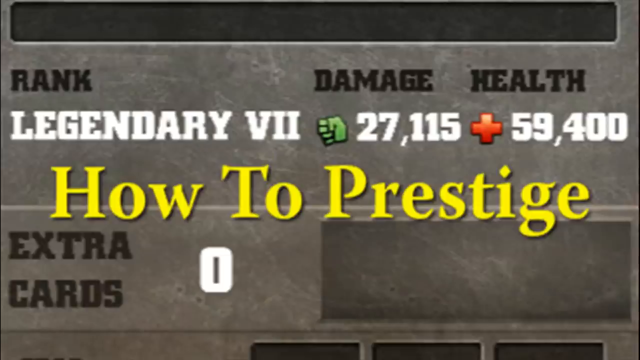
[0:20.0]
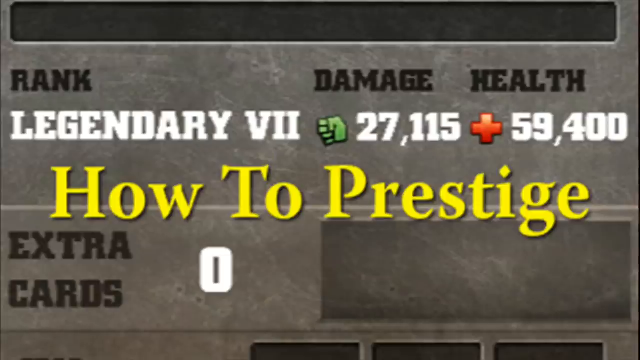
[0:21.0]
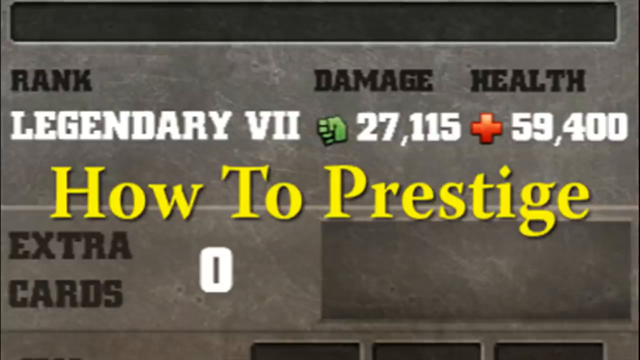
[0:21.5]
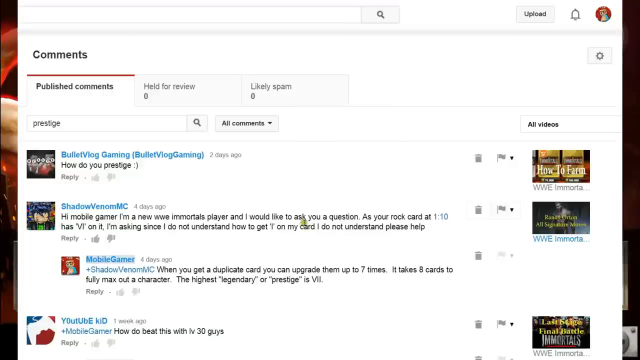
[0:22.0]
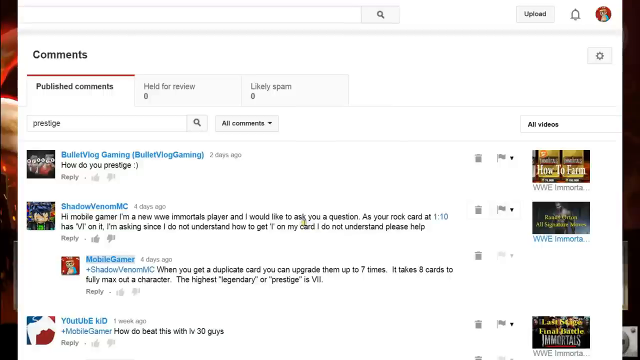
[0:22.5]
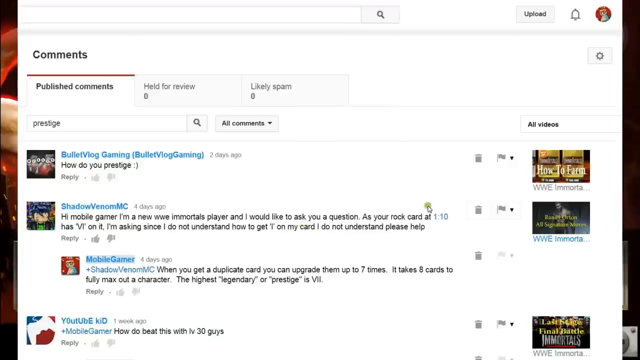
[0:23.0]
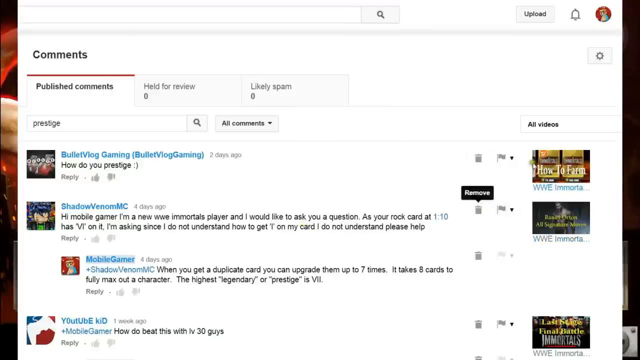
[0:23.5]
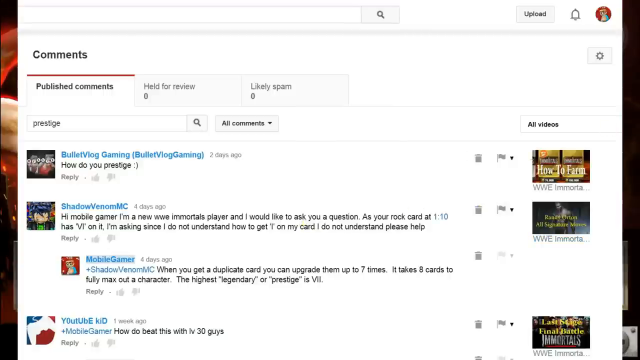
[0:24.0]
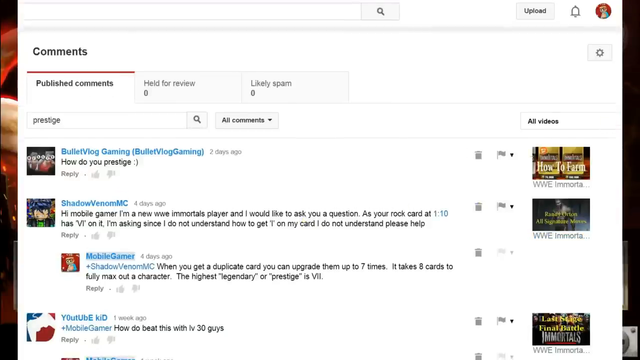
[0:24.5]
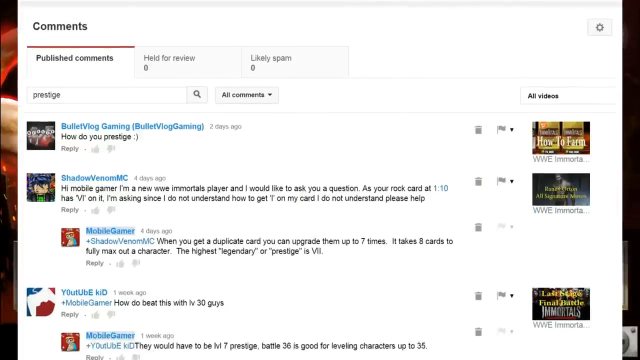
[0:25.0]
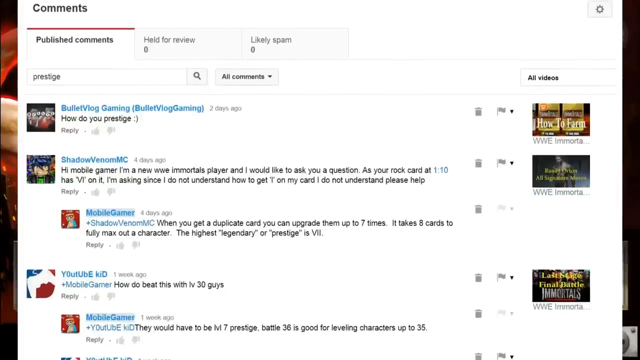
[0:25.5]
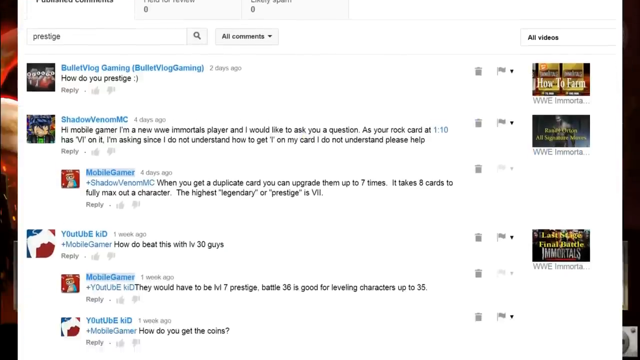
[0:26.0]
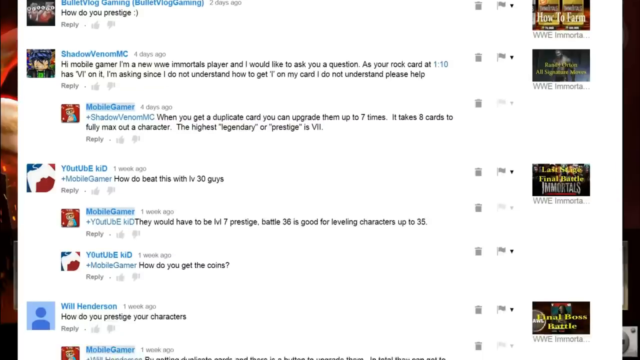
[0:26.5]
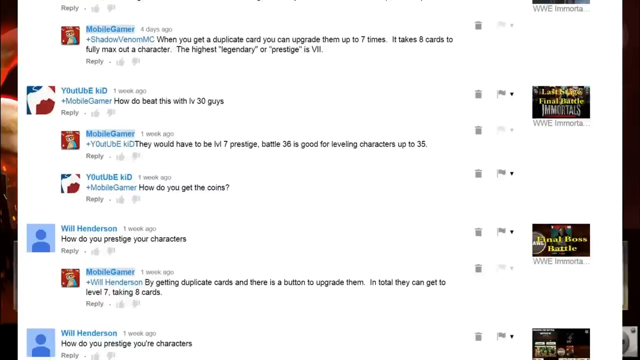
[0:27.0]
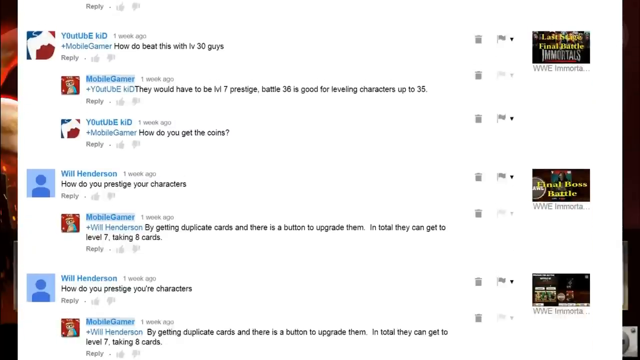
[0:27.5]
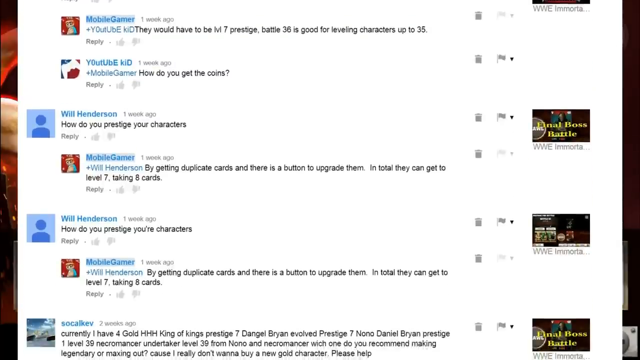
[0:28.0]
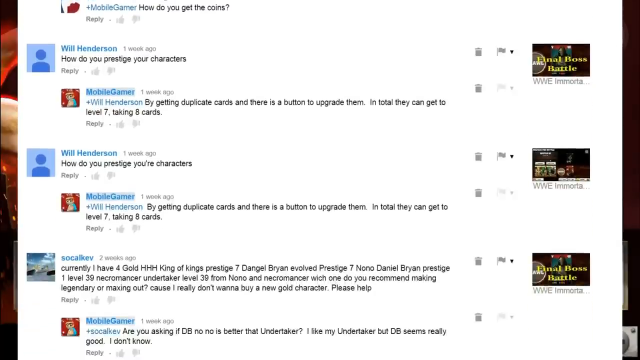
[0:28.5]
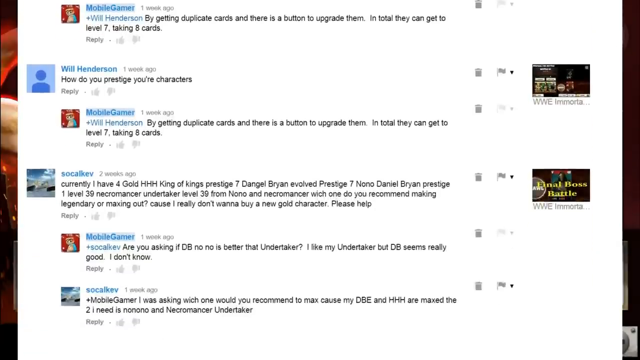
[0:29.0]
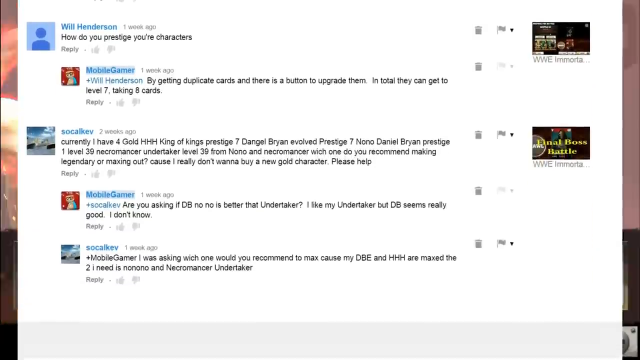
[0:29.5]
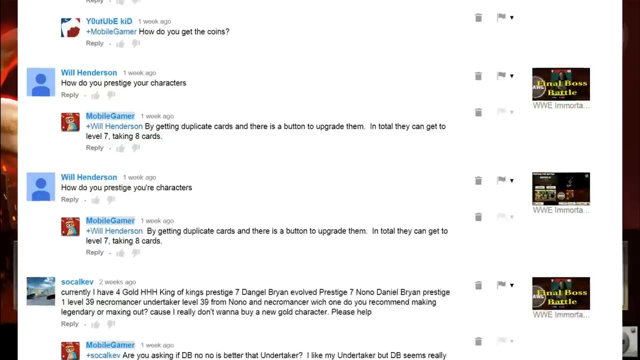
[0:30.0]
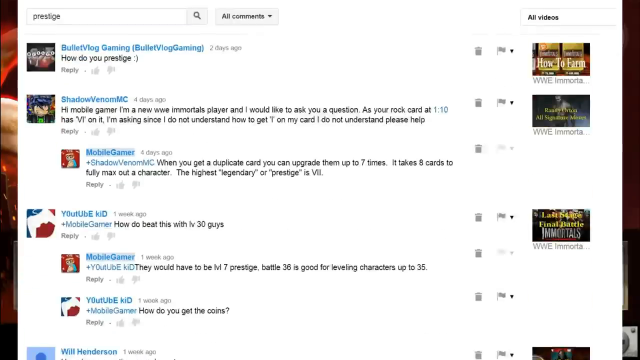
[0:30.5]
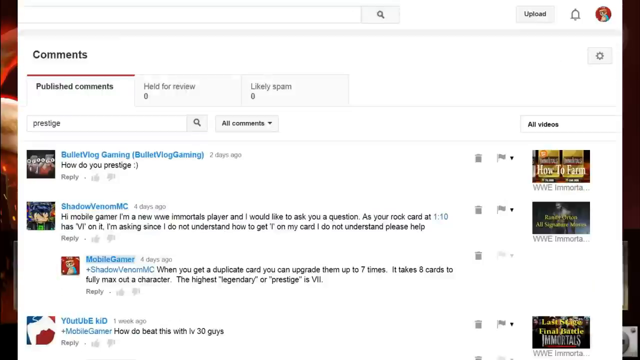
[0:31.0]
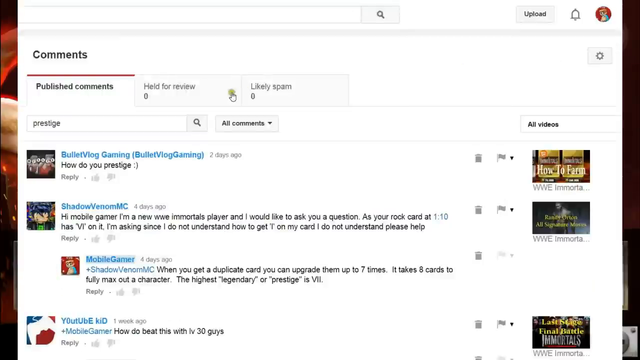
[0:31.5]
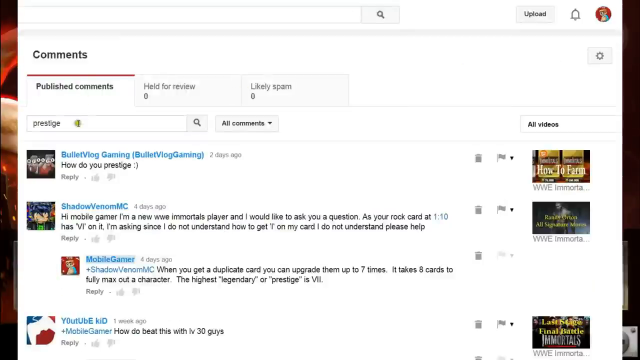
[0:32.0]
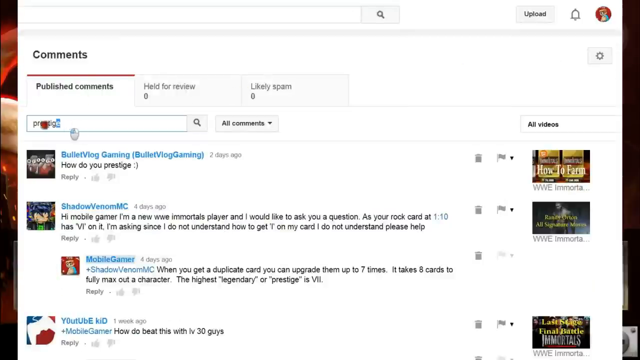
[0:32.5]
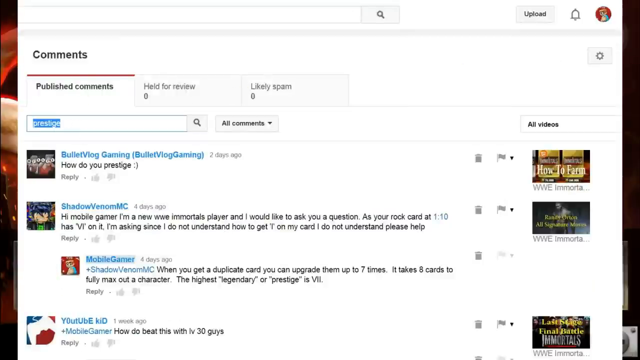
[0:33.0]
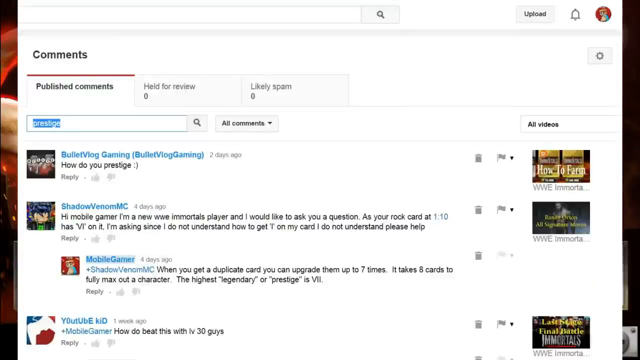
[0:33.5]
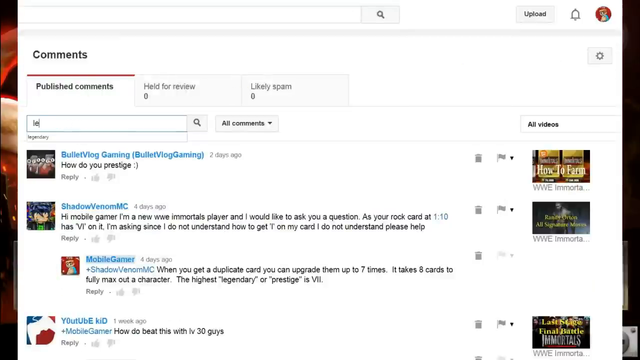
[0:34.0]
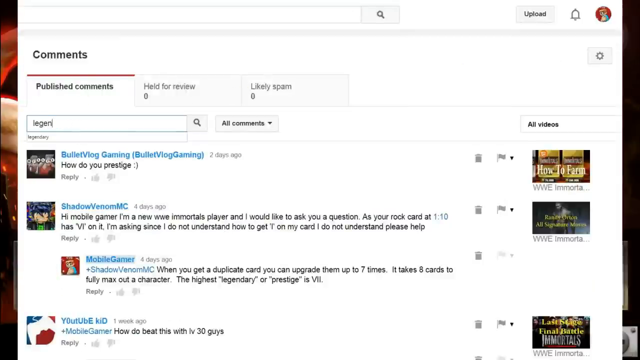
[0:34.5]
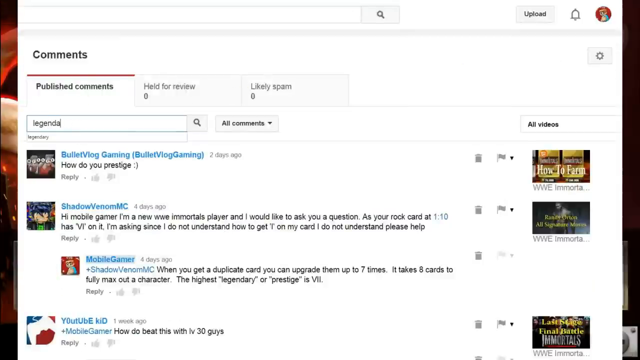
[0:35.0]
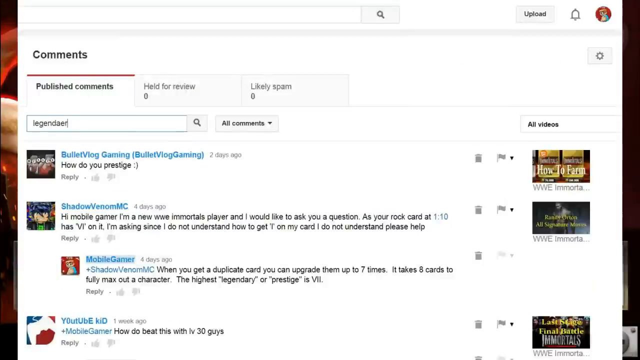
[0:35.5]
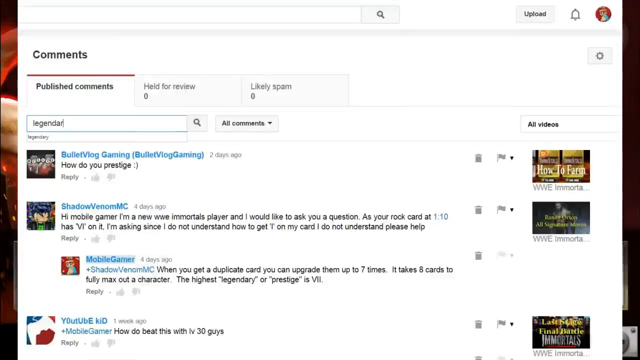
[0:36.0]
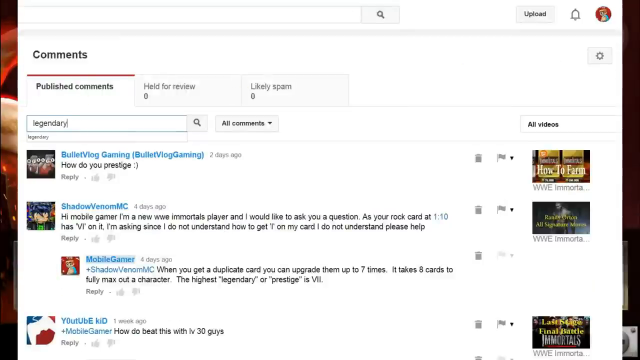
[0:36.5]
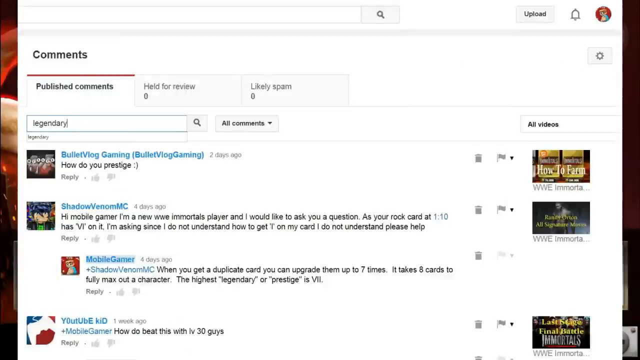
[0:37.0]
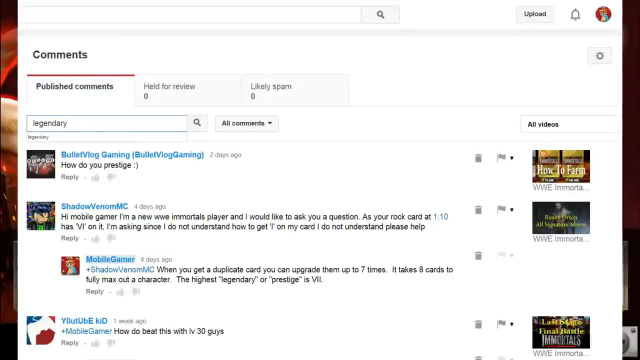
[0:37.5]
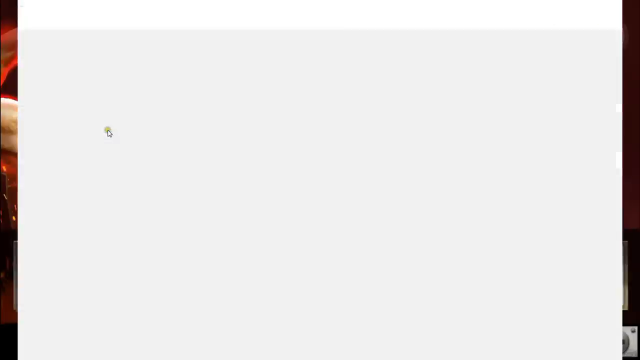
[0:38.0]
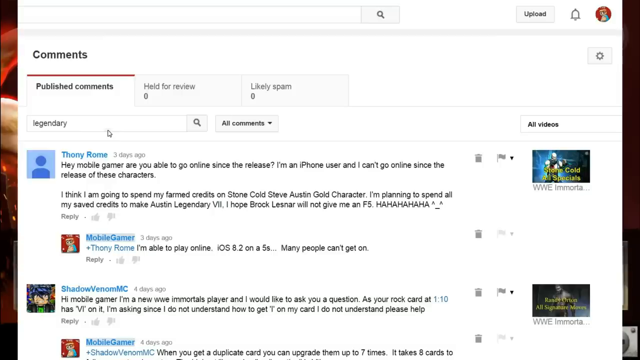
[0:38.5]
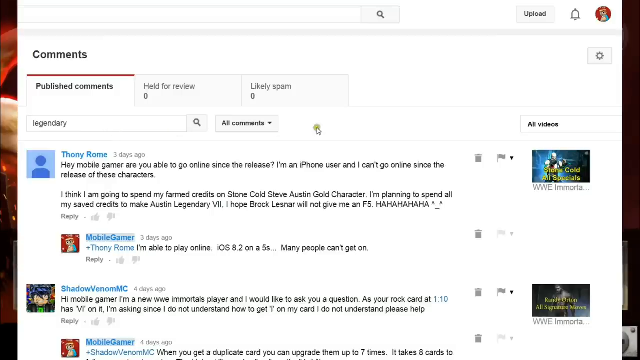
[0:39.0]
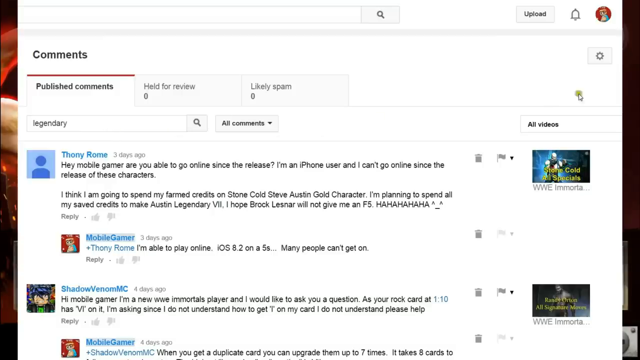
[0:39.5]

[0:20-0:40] The screen shows a comments section that looks like YouTube comments, and the person scrolls through them. One commenter says they are a WWE Immortals player, says they do not understand how to get something on their card, and asks for help. Another comment asks "How do I prestige your characters?" The person then looks at comments under the category "legendary." It is possibly a YouTuber filming themselves playing a card game.